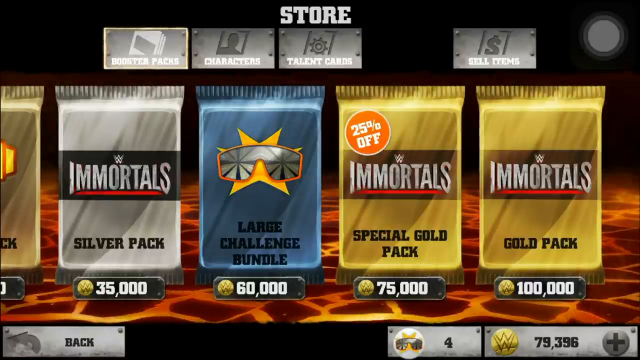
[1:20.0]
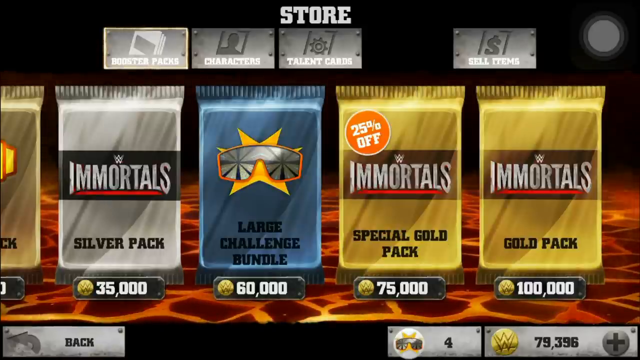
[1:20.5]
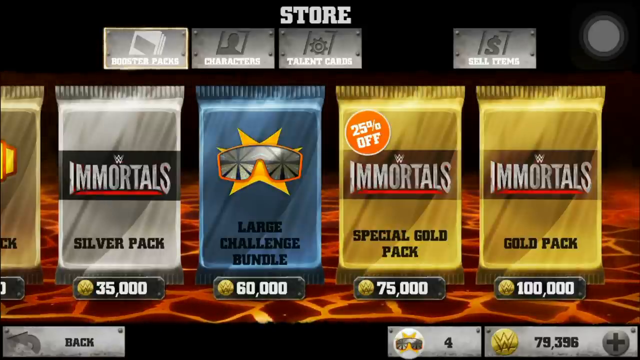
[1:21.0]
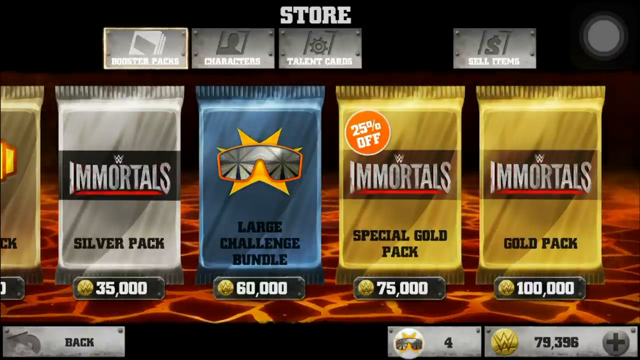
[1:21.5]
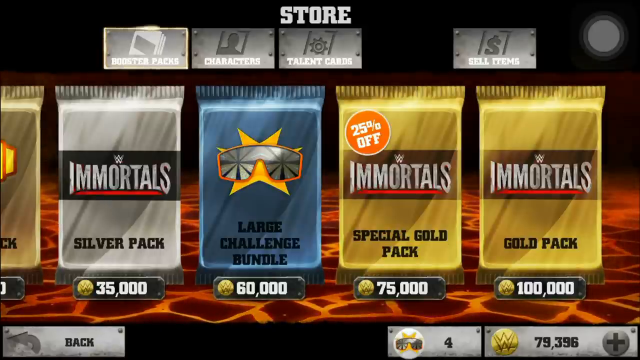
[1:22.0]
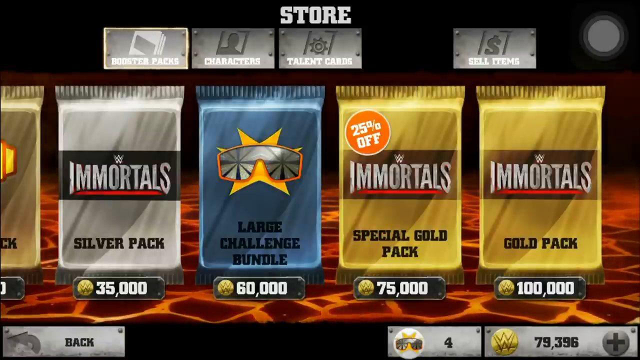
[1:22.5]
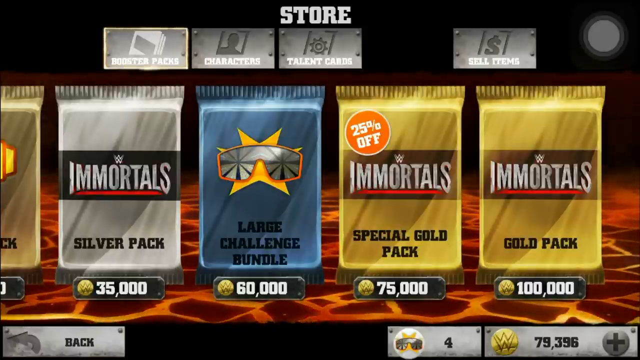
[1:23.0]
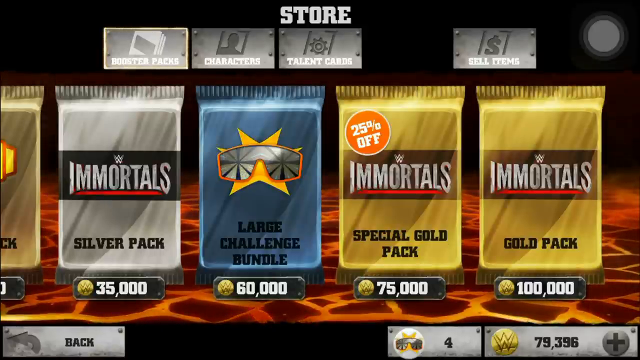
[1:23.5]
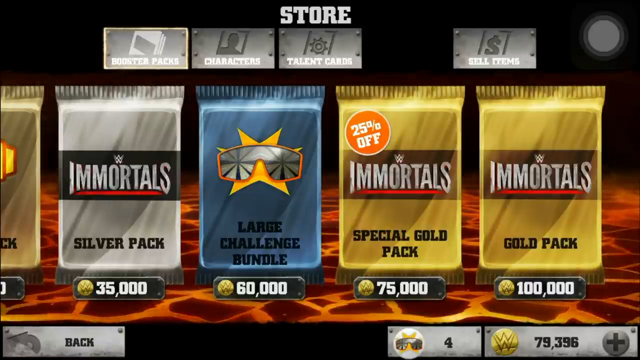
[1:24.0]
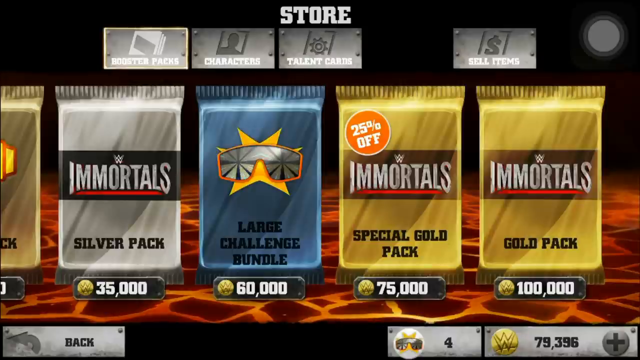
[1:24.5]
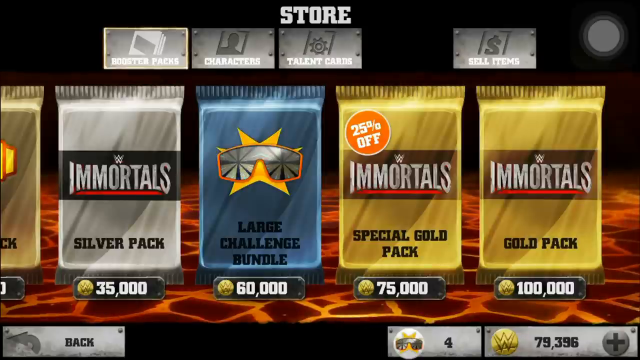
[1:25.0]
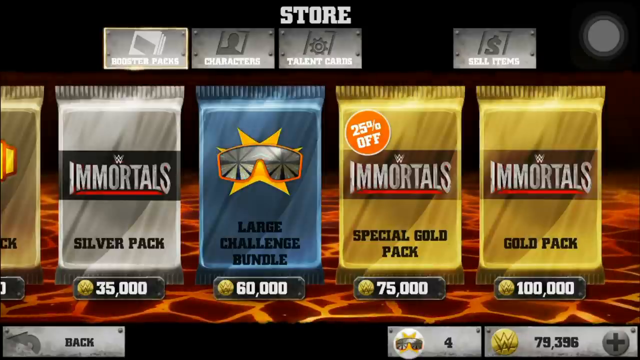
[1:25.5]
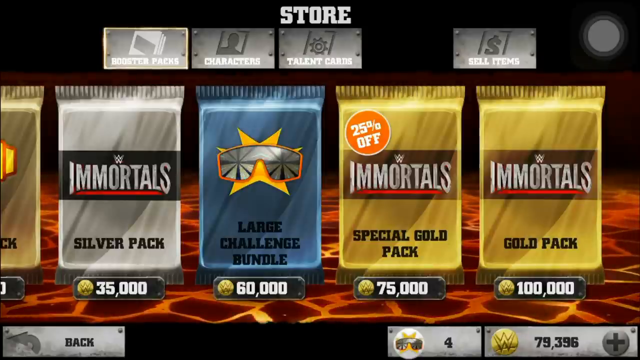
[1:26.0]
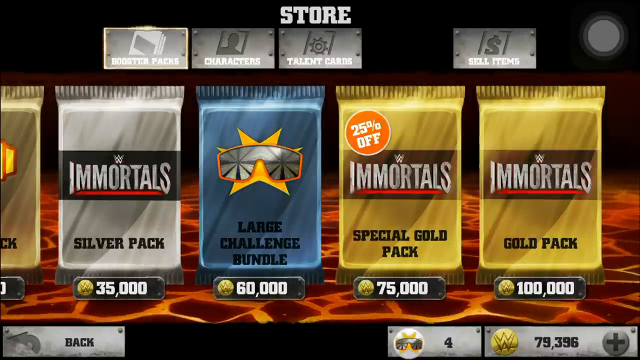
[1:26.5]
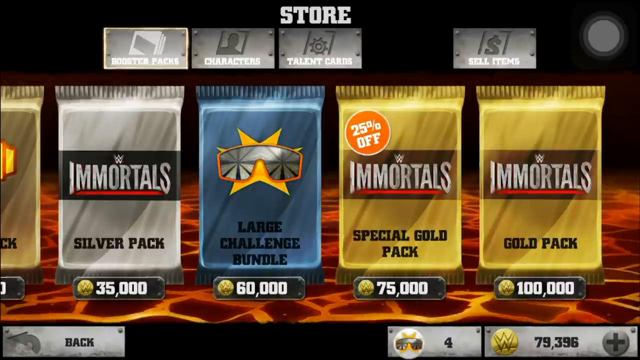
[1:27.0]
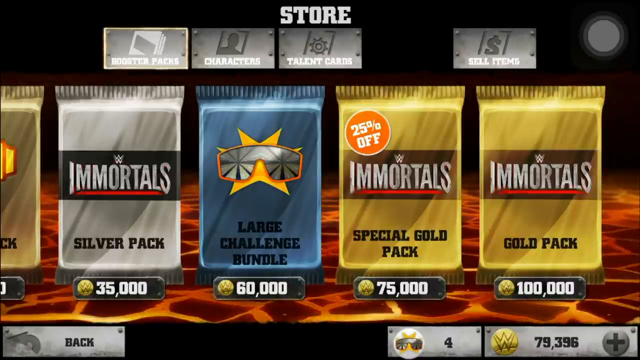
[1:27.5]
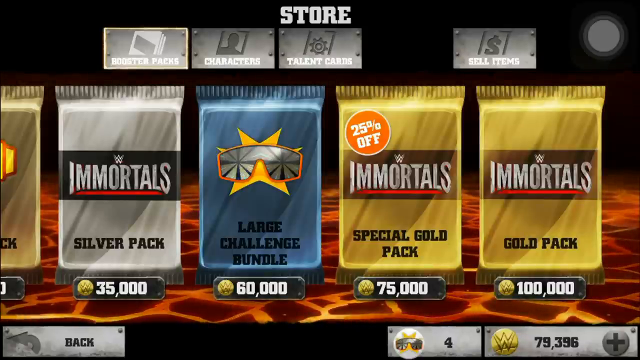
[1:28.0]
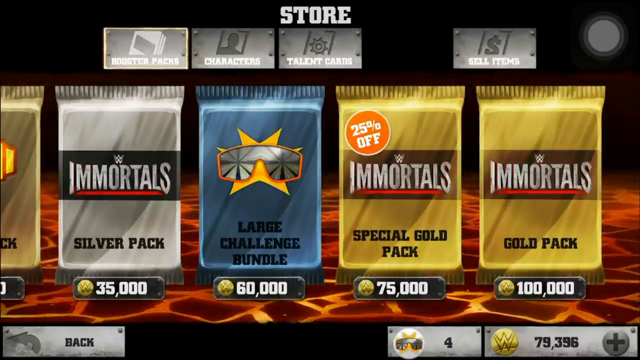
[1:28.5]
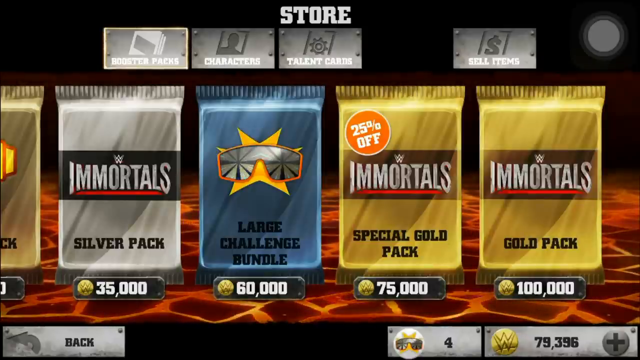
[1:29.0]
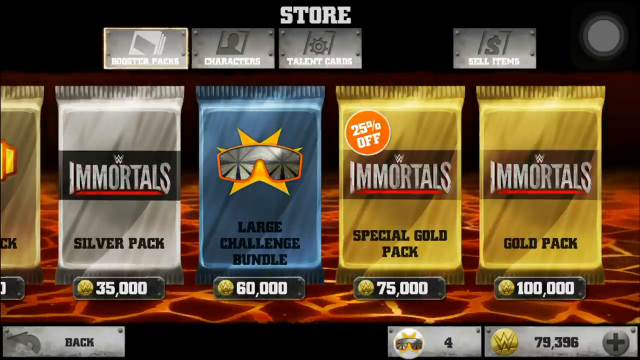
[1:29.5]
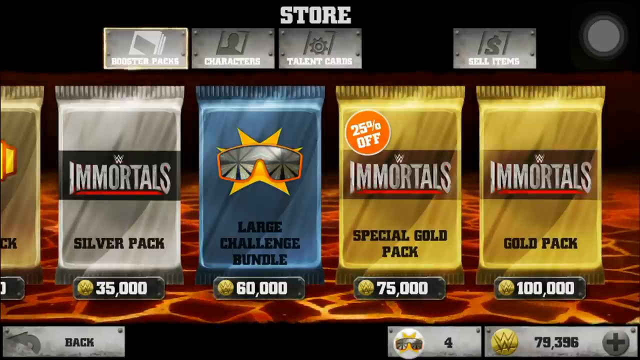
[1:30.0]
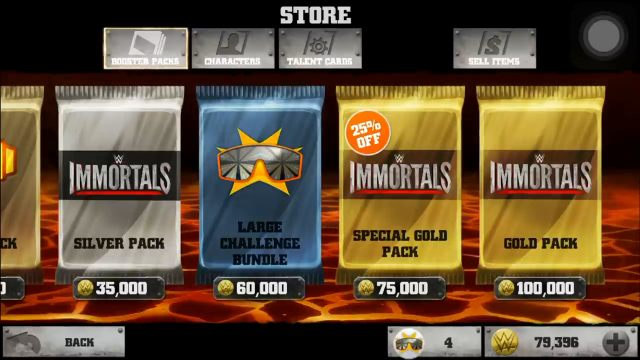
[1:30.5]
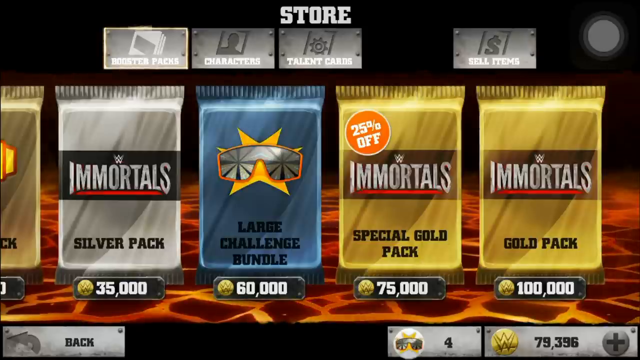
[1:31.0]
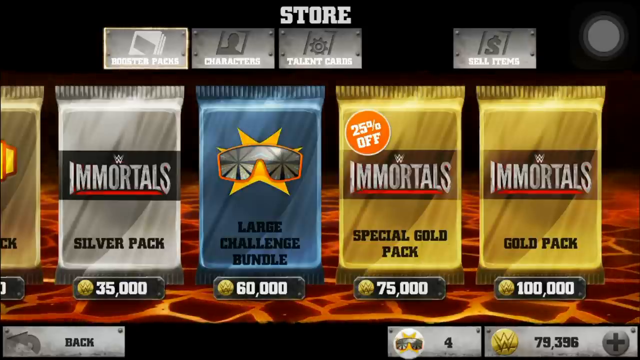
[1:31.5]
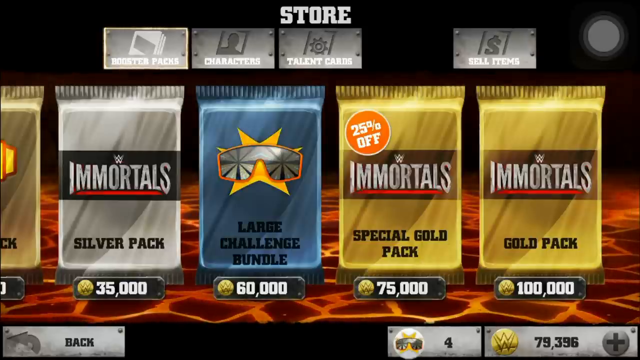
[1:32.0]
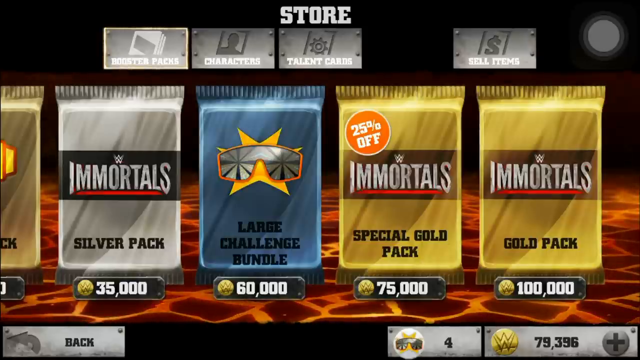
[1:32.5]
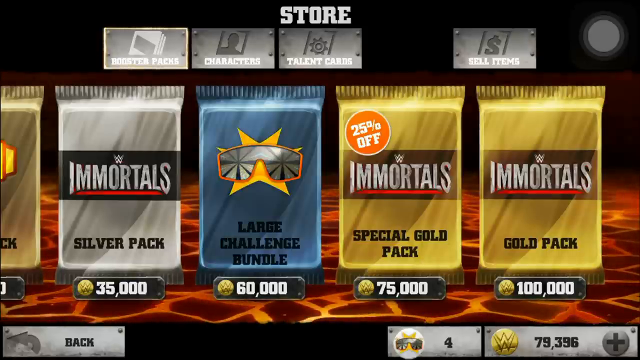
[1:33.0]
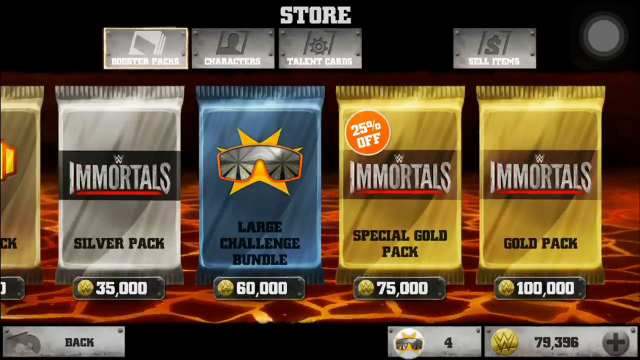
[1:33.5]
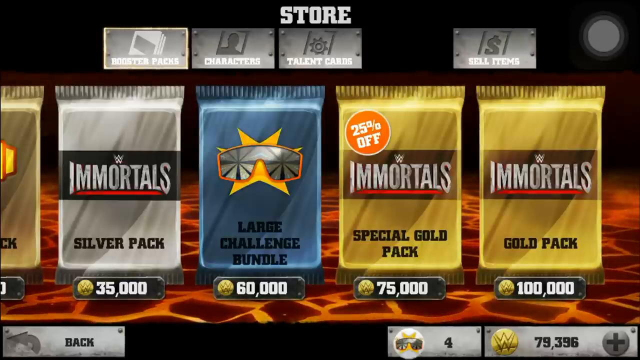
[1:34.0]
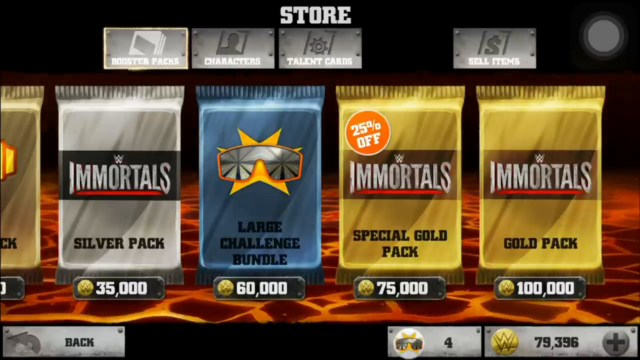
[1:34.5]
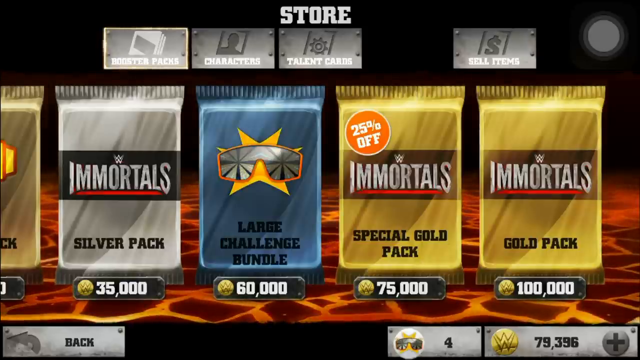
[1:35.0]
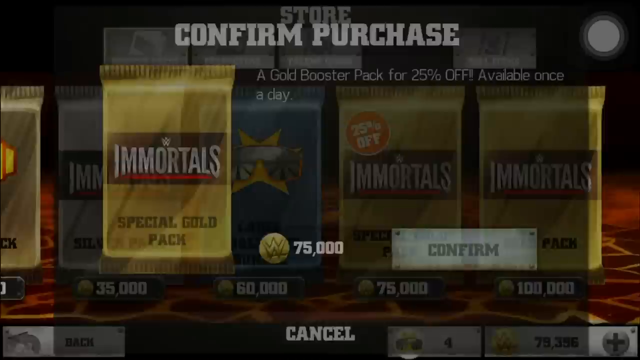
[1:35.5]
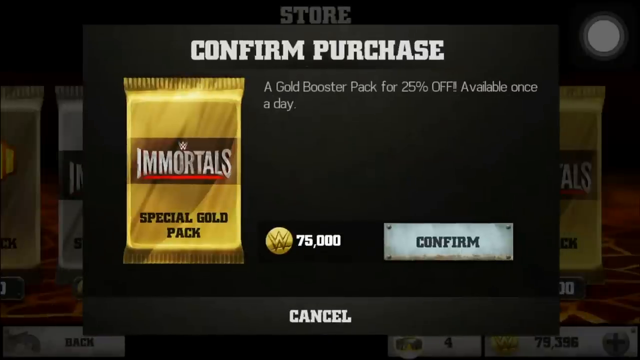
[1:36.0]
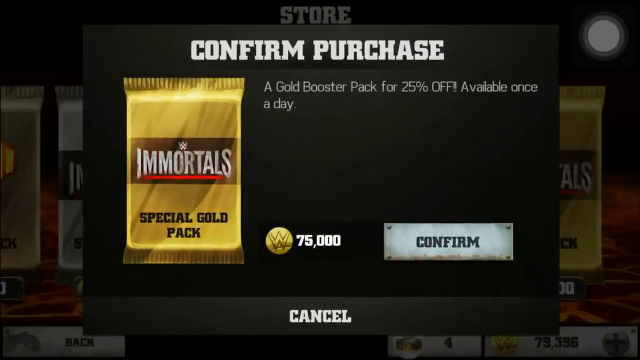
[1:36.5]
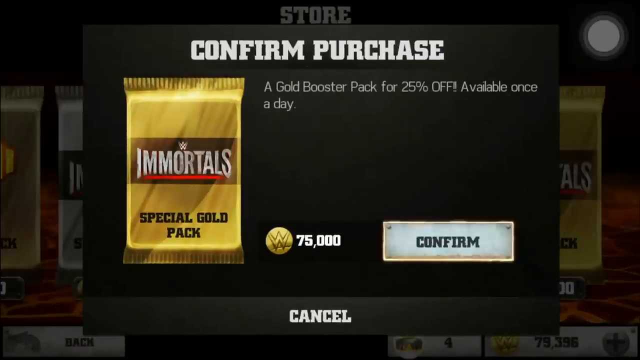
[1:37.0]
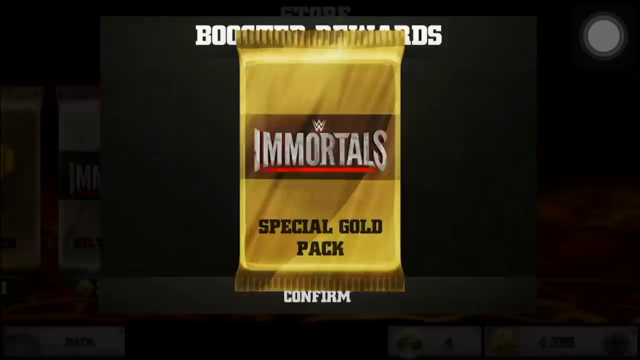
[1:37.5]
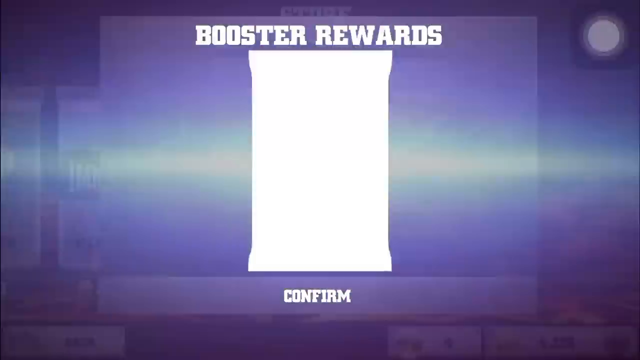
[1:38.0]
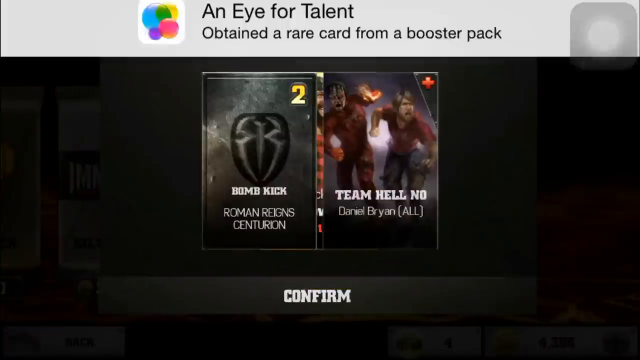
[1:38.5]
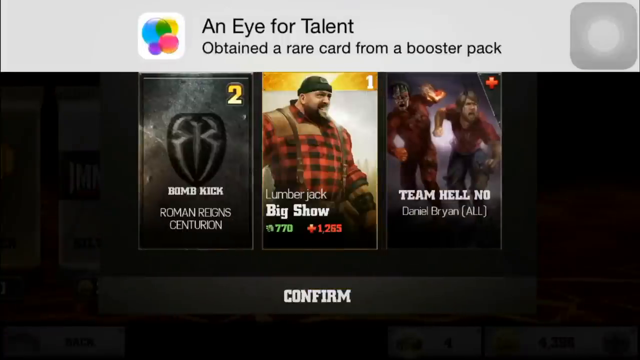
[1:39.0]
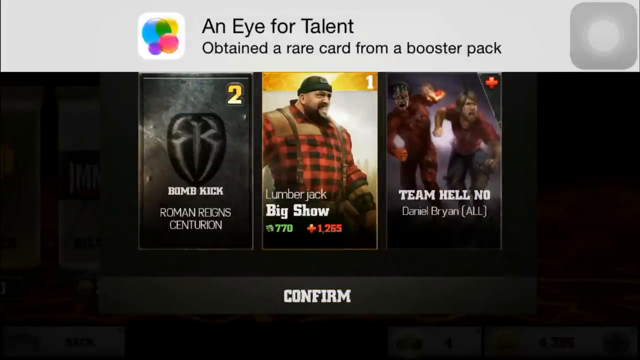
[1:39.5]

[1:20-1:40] The store with its different packs is still on screen. The special gold pack shows 25% off, and the Immortals gold pack appears to be the most expensive at 100,000. The person then buys a special gold pack for 75,000, described as a gold booster pack at 25% off, available once a day. A purchase confirmation appears, then text reads "an eye for talent obtained a rare card from a booster pack." The cards received are a Roman Reigns Centurion bomb kick card, a Big Show lumberjack card and a Team Hell No Daniel Bryan card.